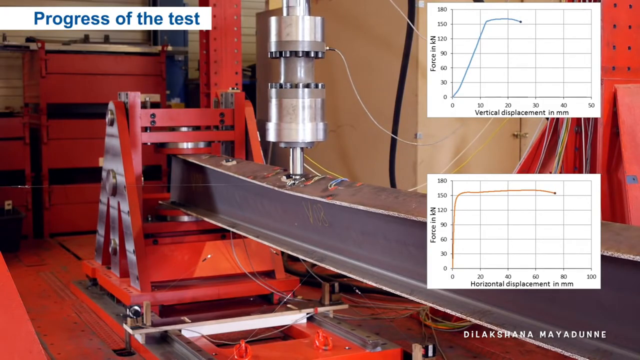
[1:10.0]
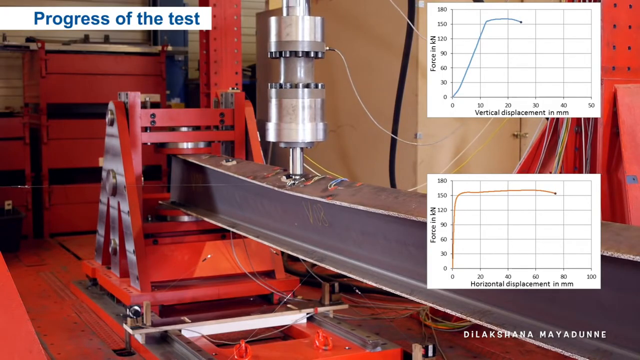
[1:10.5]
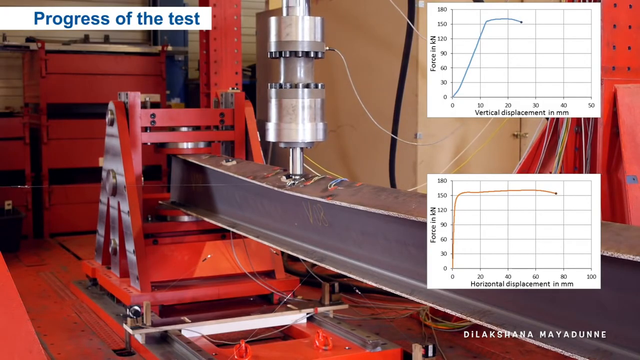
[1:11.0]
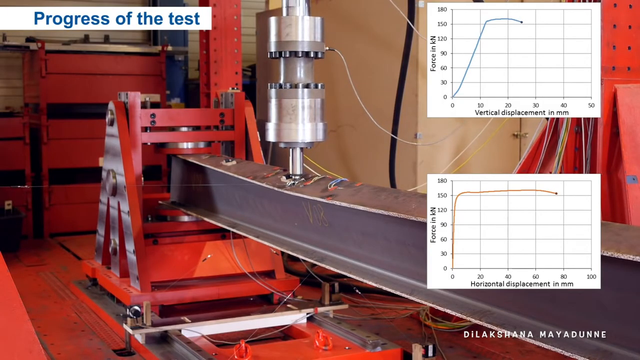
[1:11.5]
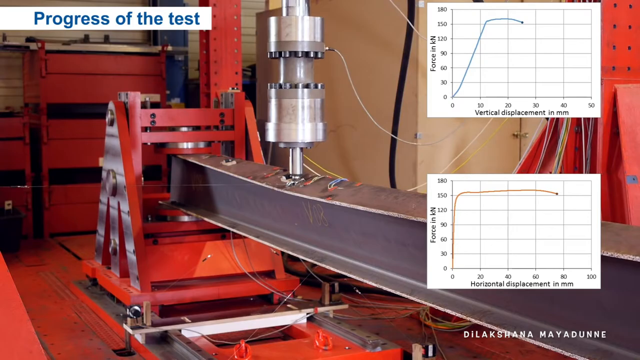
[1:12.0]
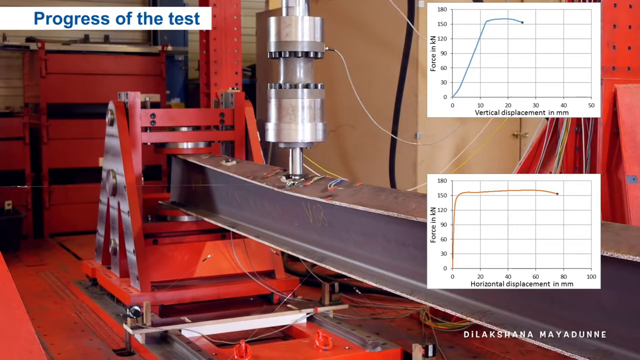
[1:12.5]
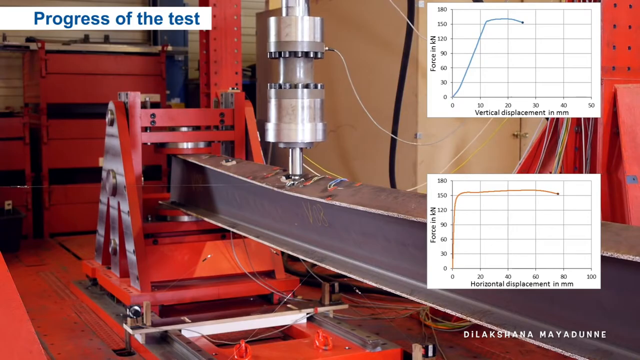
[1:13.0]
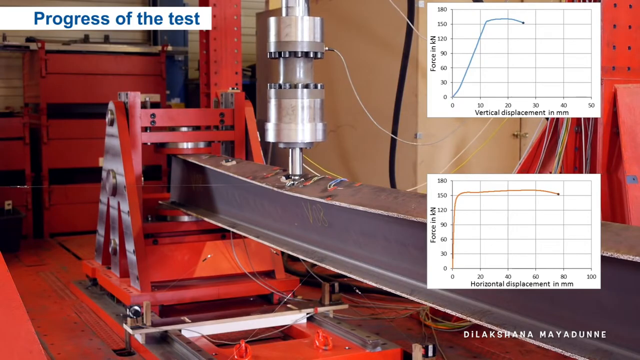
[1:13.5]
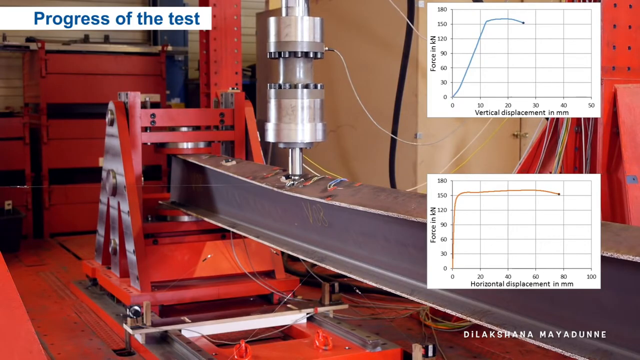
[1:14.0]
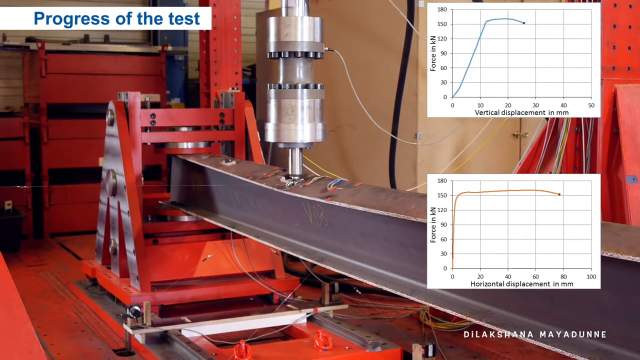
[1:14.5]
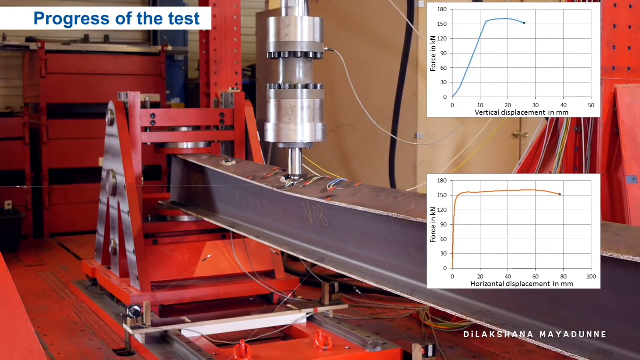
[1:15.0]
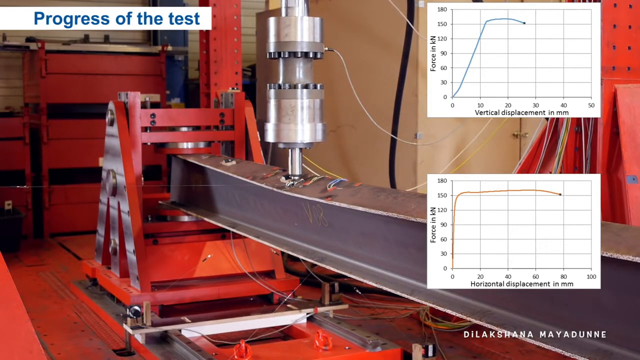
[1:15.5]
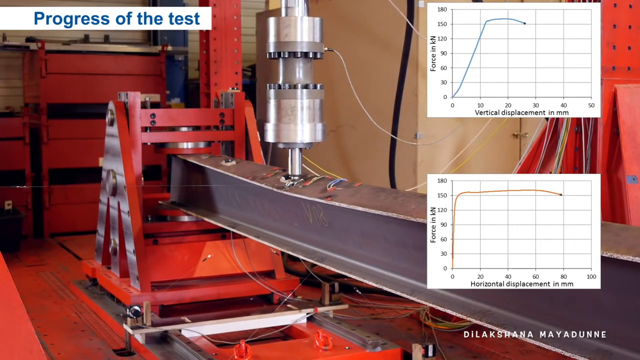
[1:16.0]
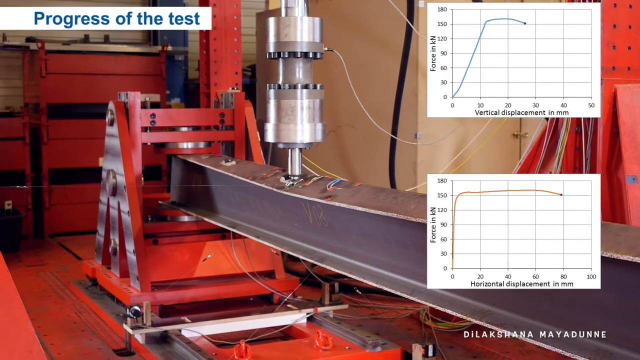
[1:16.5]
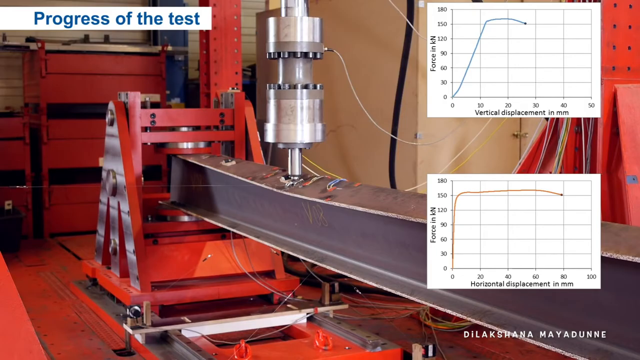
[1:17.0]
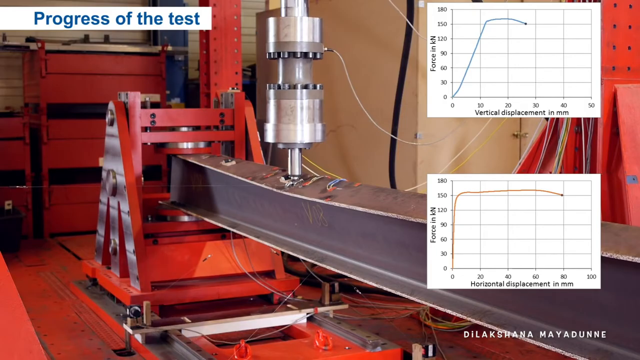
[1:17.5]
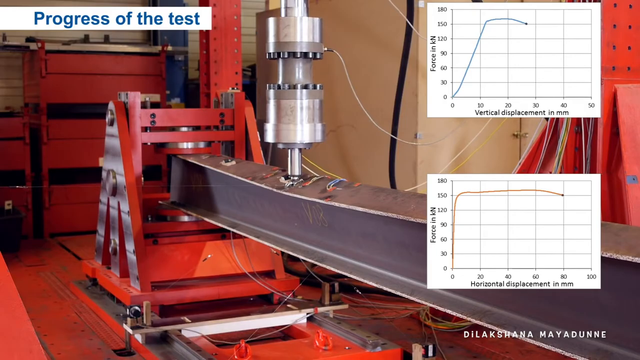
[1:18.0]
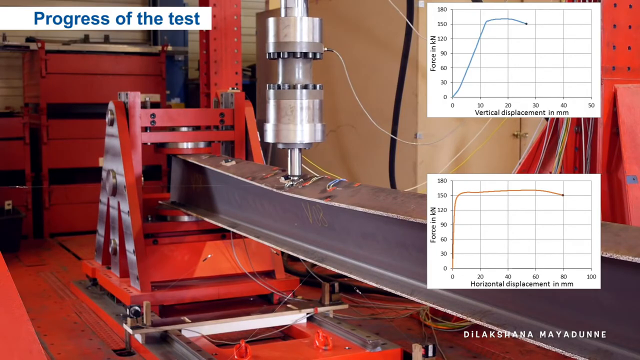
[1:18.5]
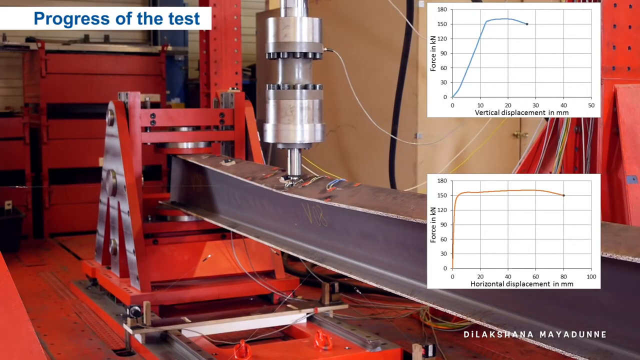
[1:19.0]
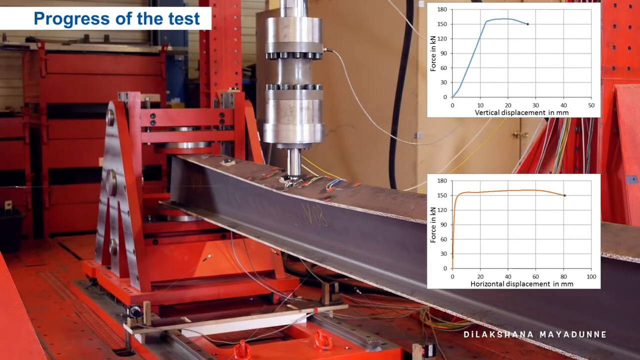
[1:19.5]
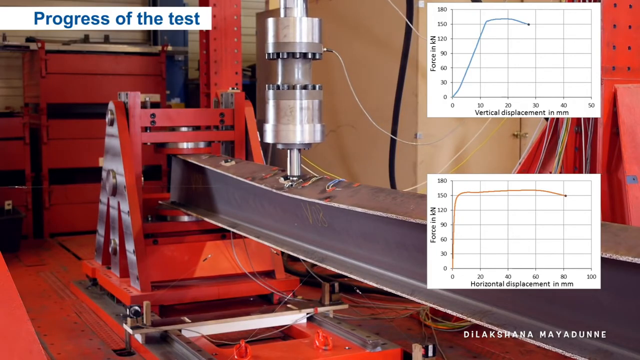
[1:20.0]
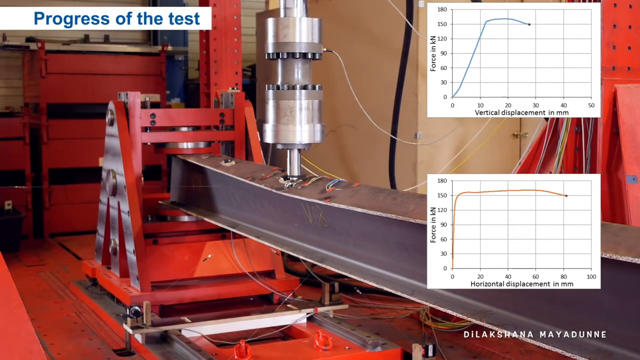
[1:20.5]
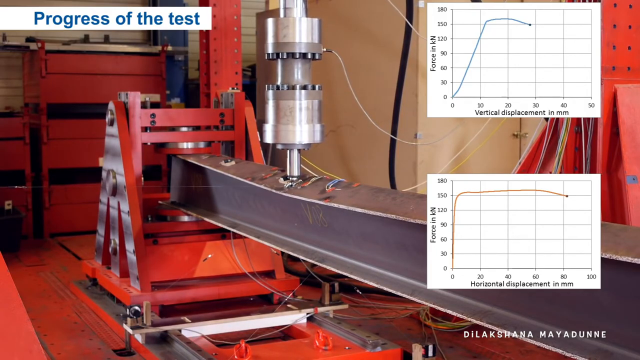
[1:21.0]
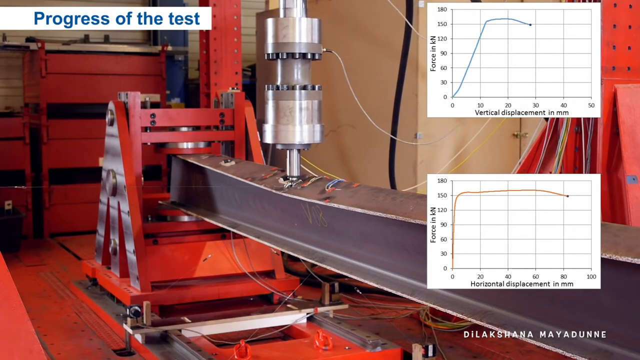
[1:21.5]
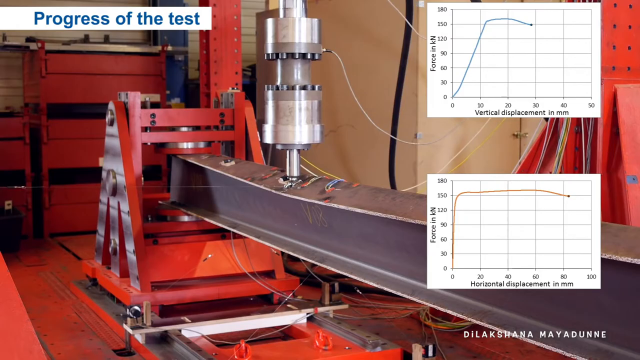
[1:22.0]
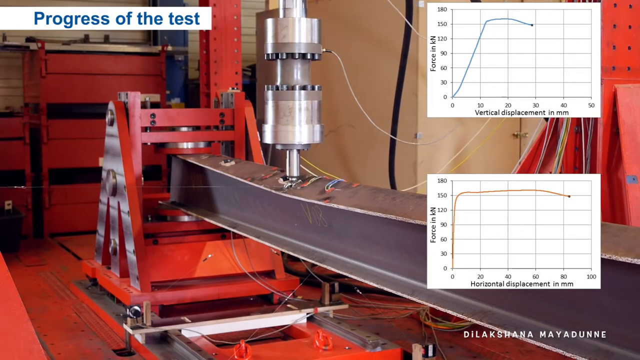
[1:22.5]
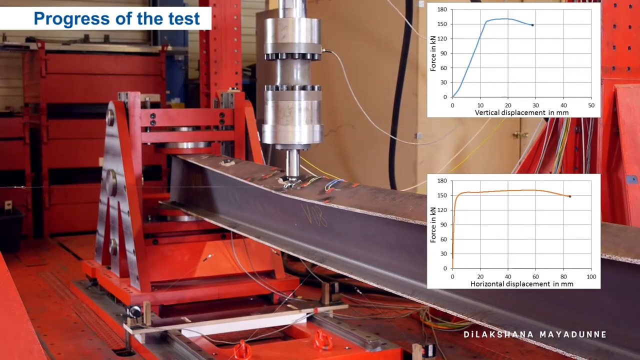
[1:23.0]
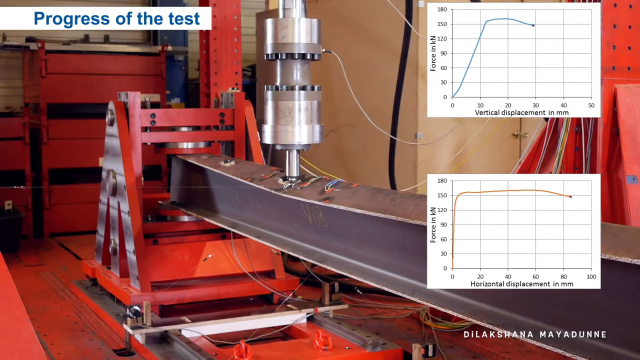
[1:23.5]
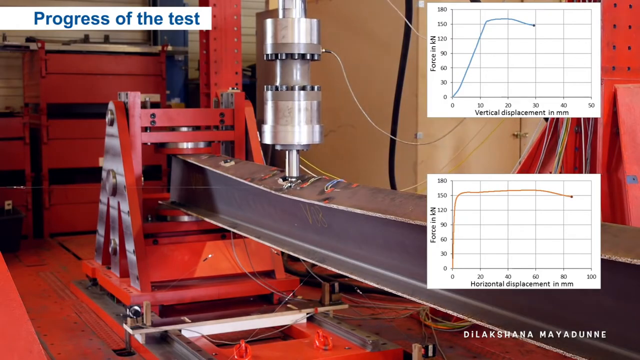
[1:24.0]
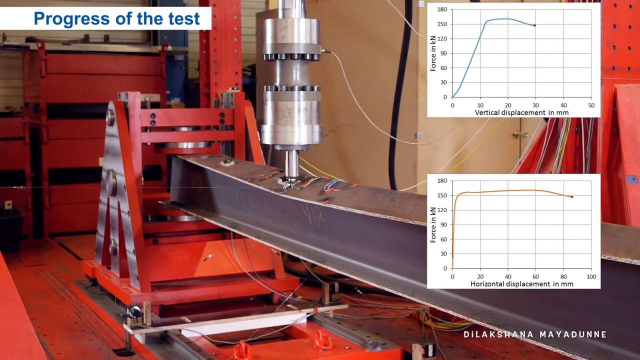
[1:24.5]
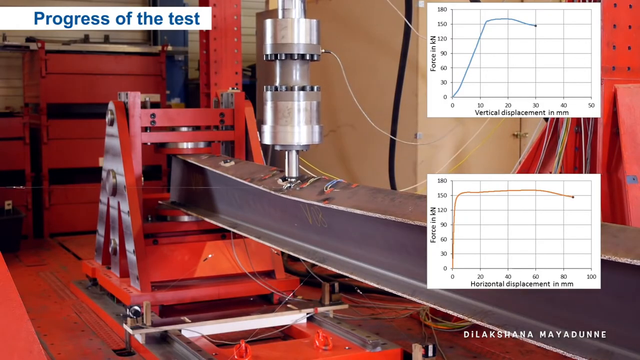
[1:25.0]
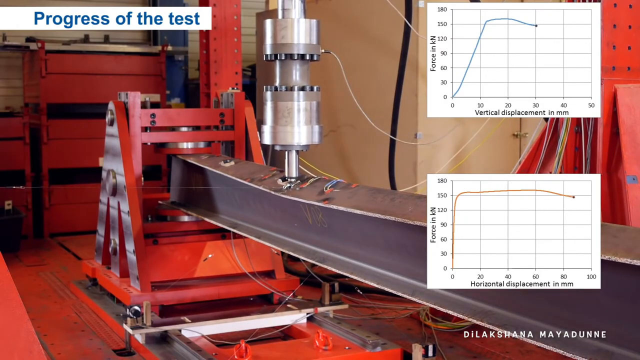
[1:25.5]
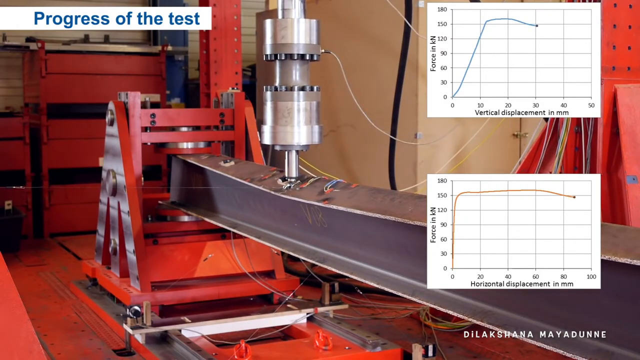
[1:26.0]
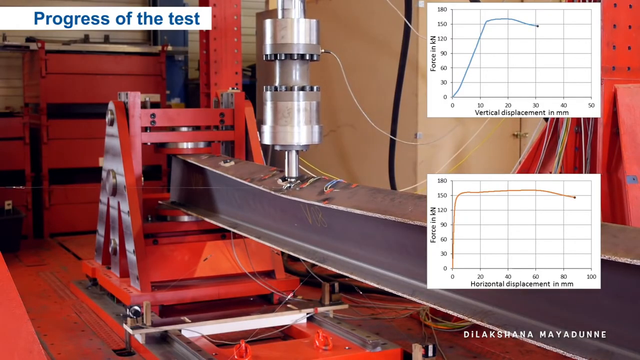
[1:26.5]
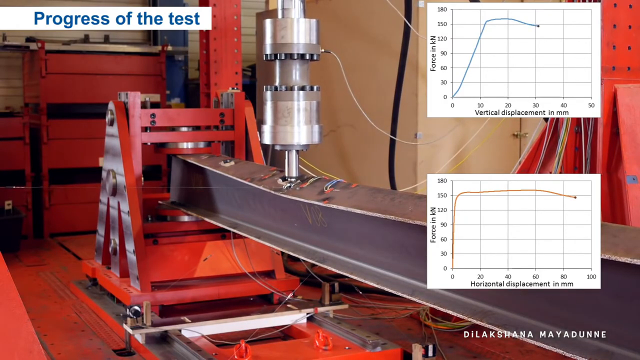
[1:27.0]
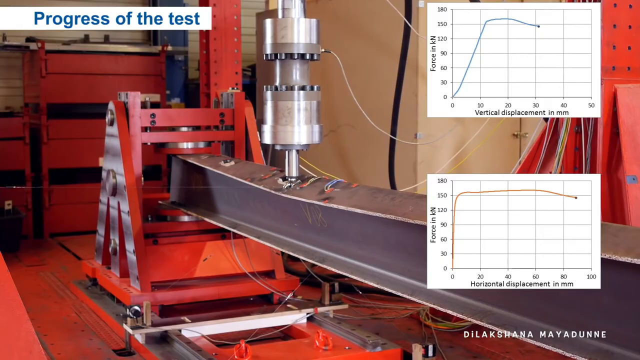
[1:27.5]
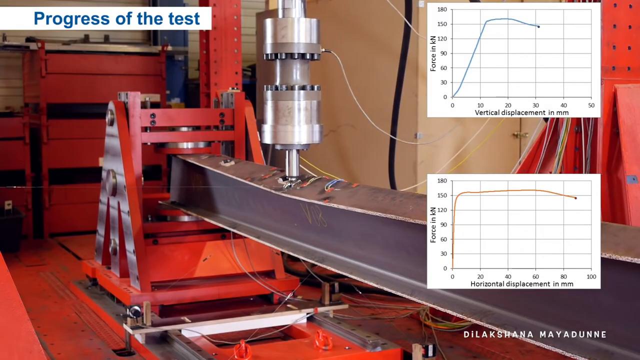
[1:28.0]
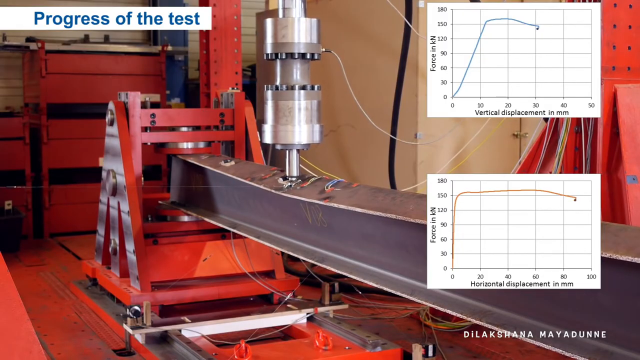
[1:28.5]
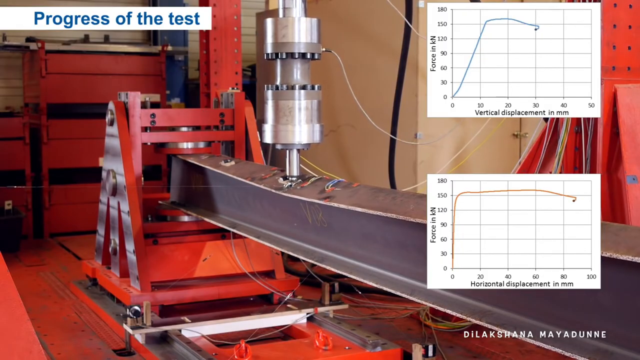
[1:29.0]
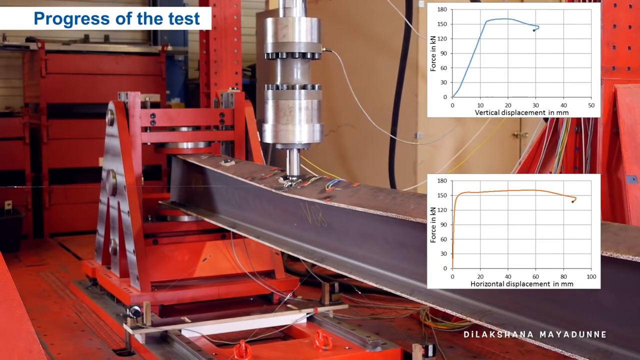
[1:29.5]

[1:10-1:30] A cylindrical object in the upper center of the screen drills into the strip in the middle of the scene. There are many red objects in the background, including various red machinery and a red cabinet in the far back left. The lighting is a bit dark, with a slight black shadow in the background. The floor at the bottom is red, and the background has a white wall with a slight shadow. A black wire runs down the middle of the scene, and the area is somewhat messy, with wires hanging in various places. In the top left of the screen, blue text over a white background reads "progress of the test on a strip".